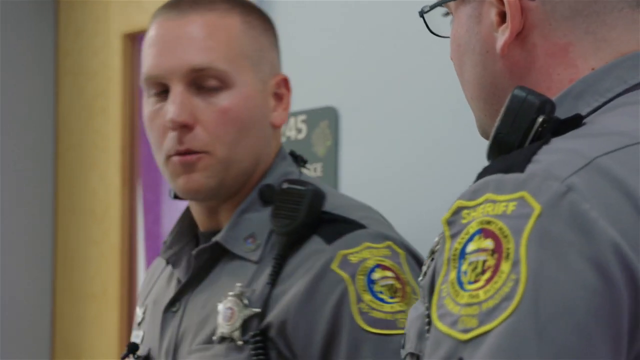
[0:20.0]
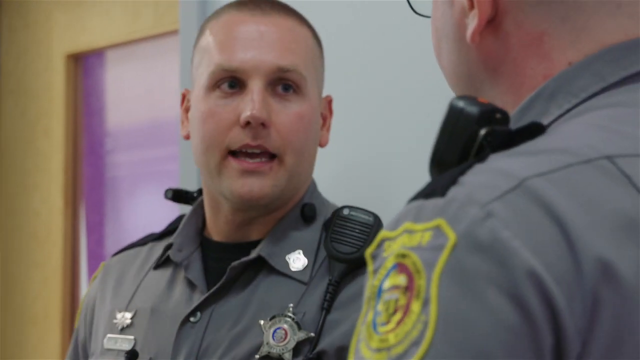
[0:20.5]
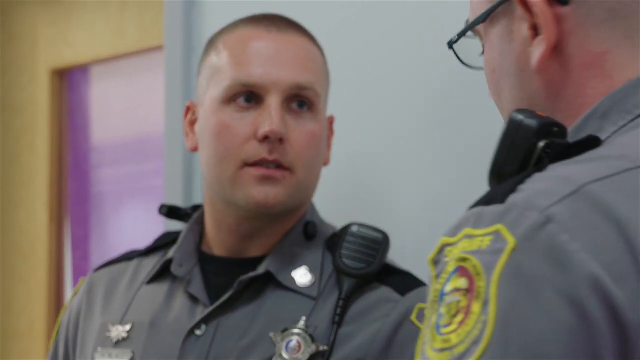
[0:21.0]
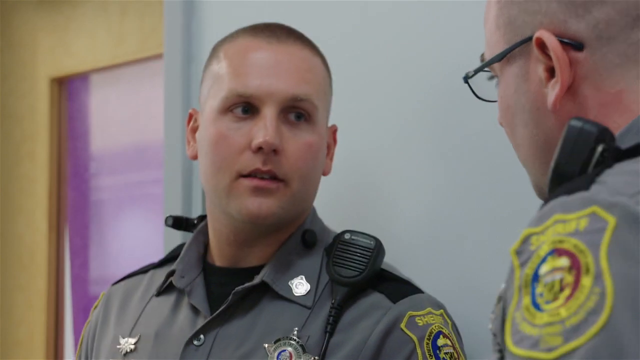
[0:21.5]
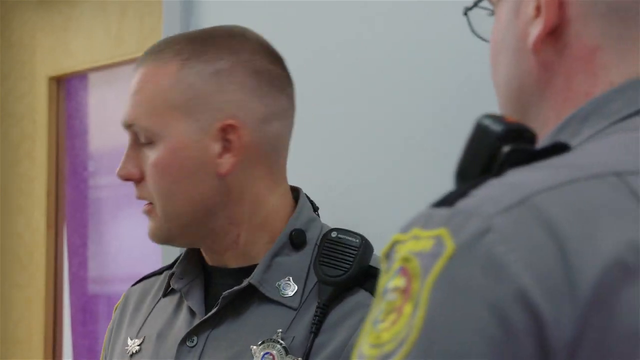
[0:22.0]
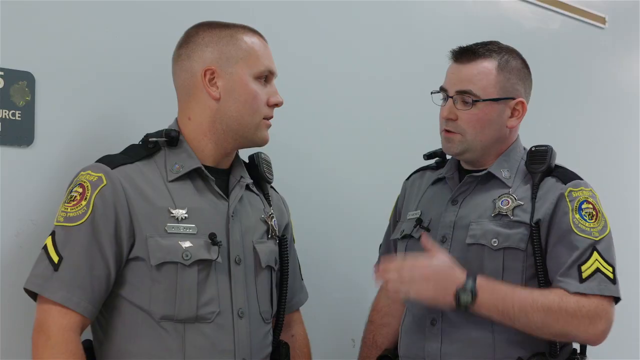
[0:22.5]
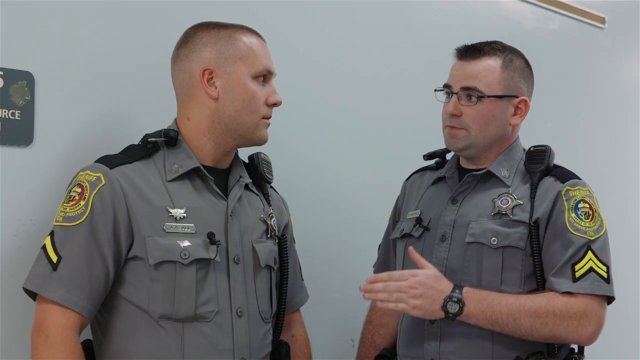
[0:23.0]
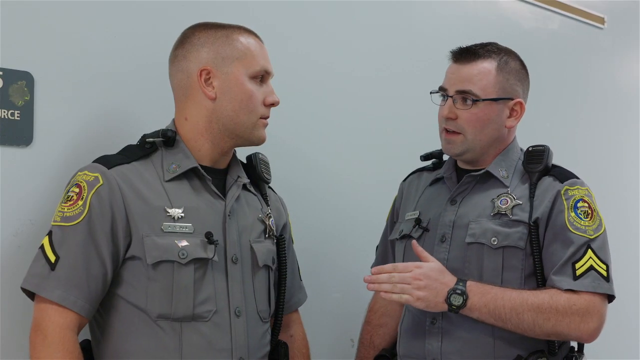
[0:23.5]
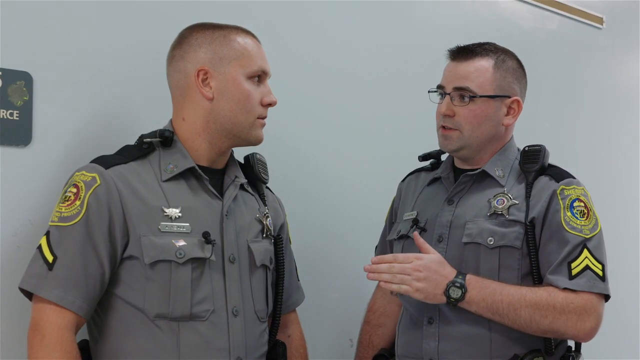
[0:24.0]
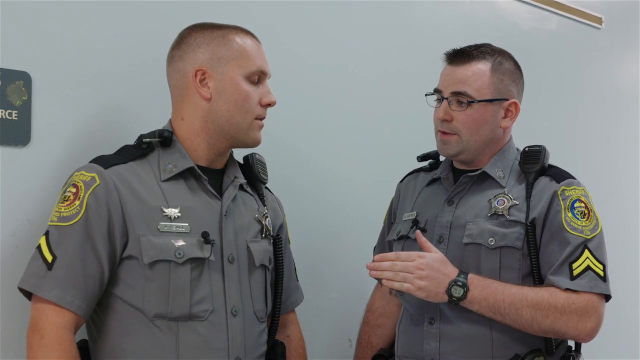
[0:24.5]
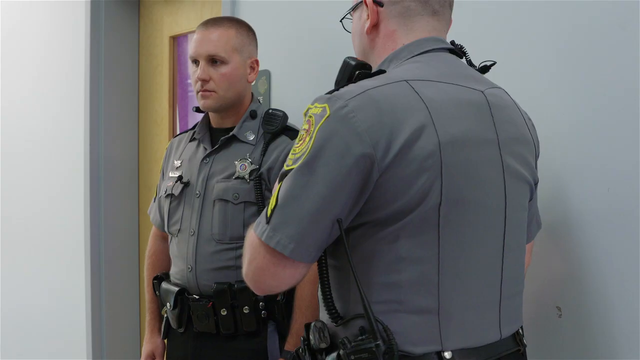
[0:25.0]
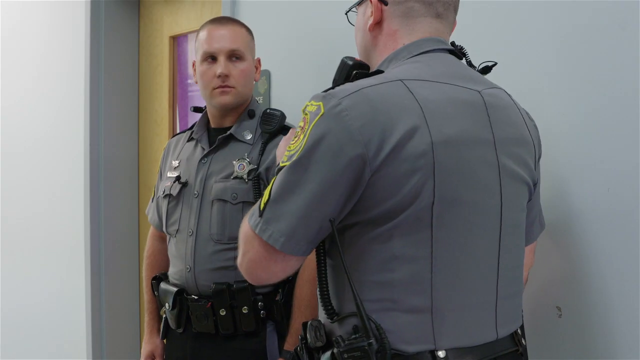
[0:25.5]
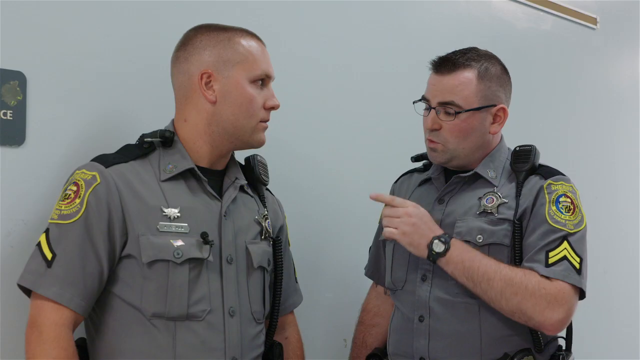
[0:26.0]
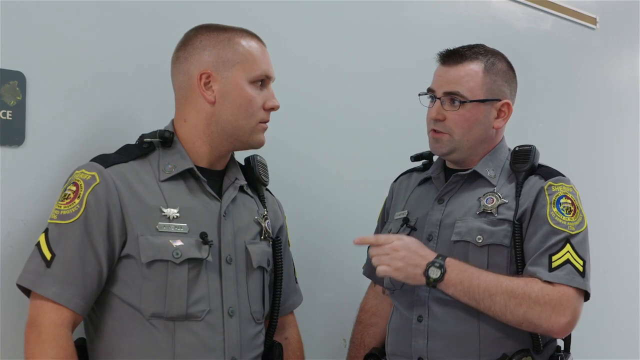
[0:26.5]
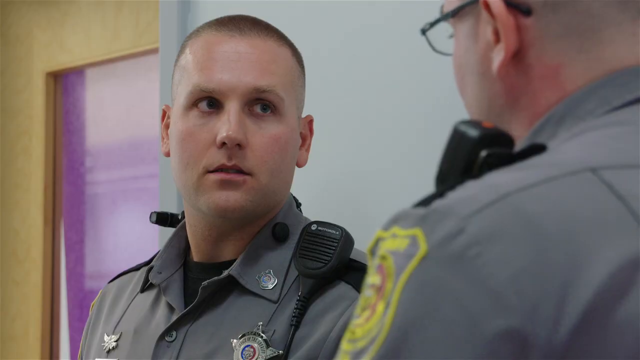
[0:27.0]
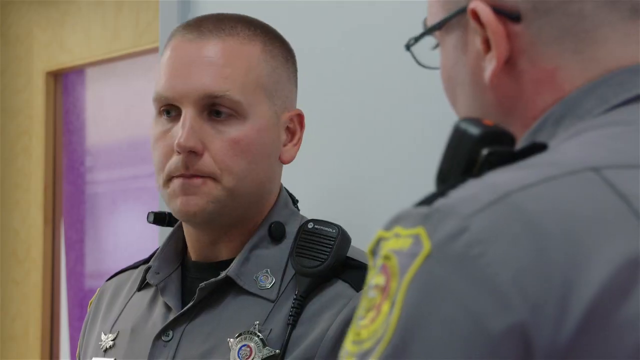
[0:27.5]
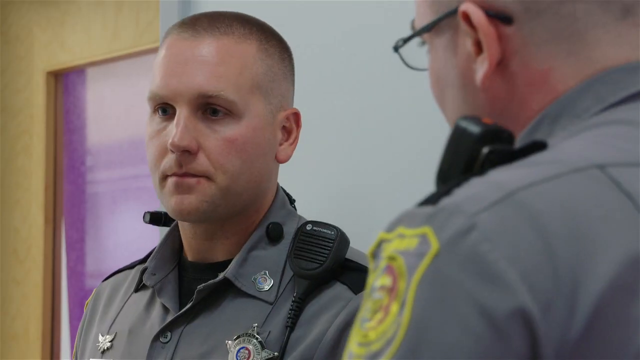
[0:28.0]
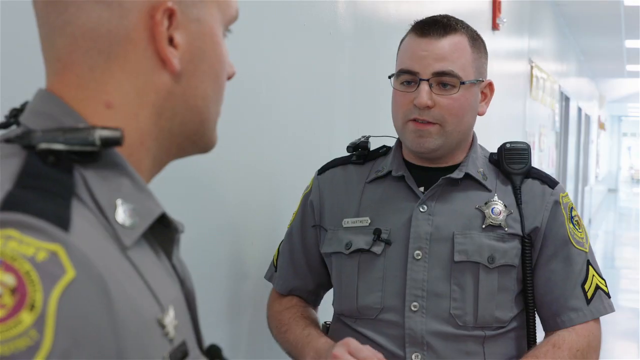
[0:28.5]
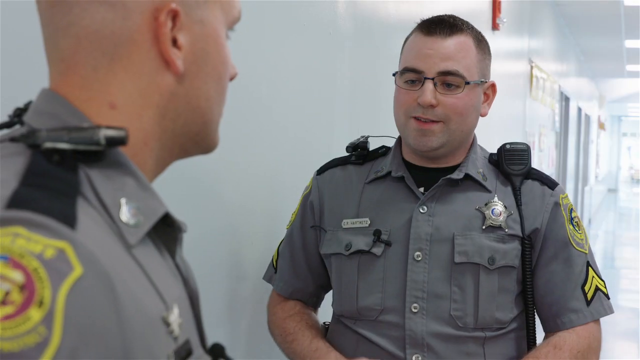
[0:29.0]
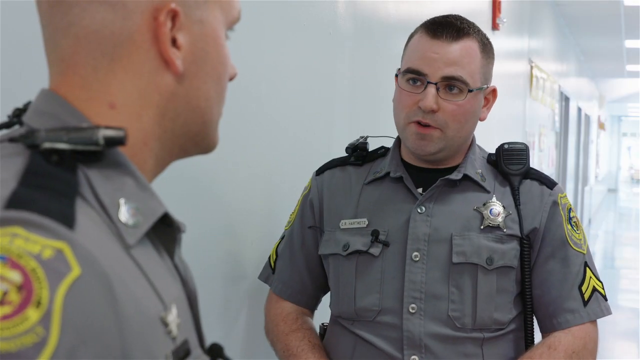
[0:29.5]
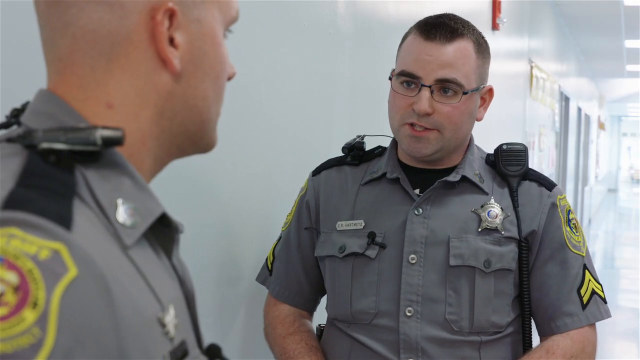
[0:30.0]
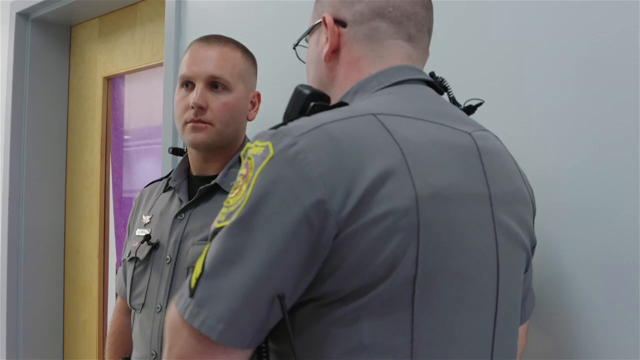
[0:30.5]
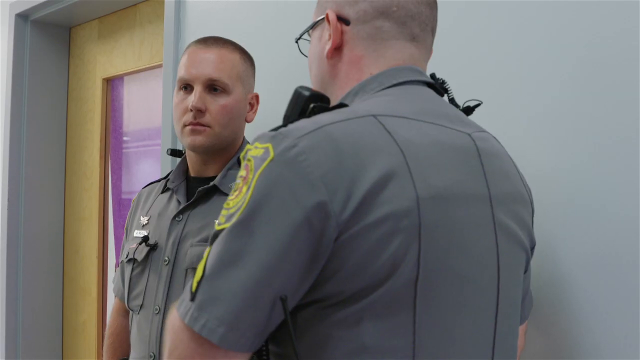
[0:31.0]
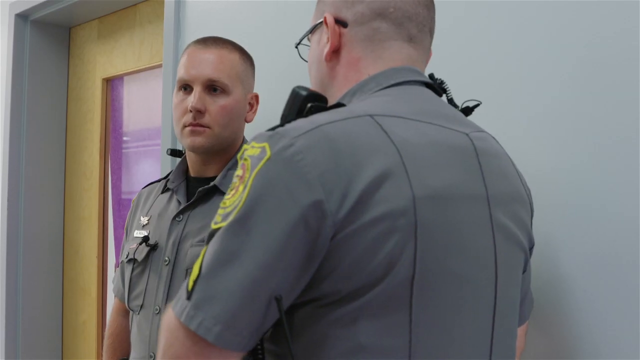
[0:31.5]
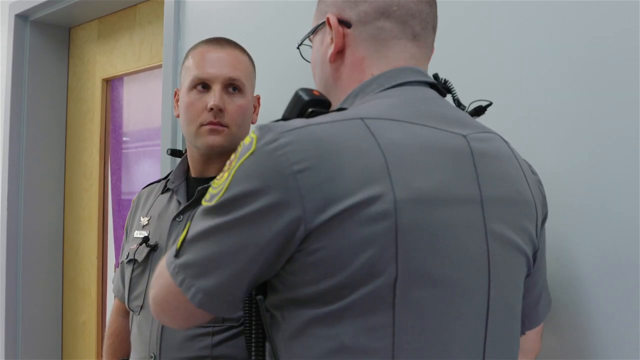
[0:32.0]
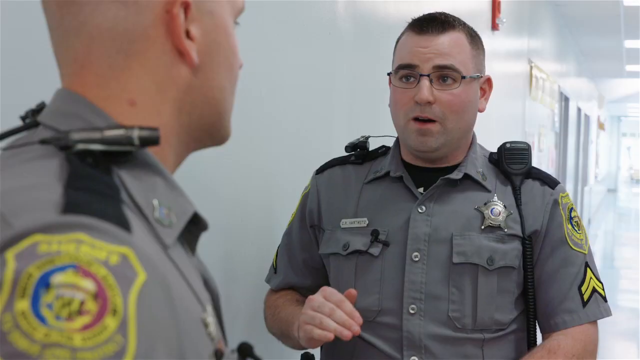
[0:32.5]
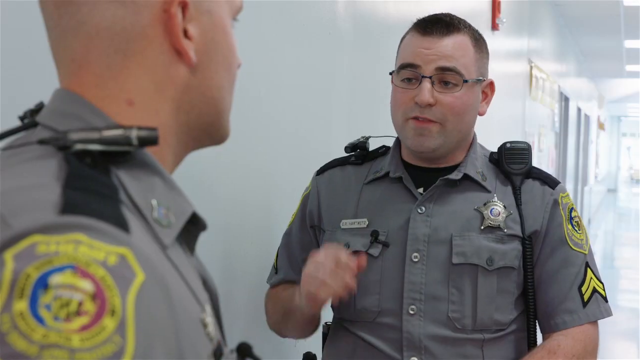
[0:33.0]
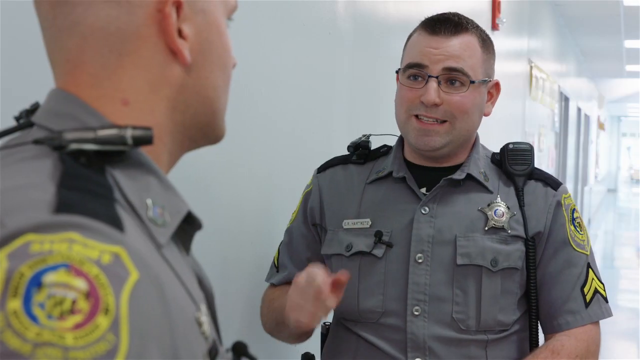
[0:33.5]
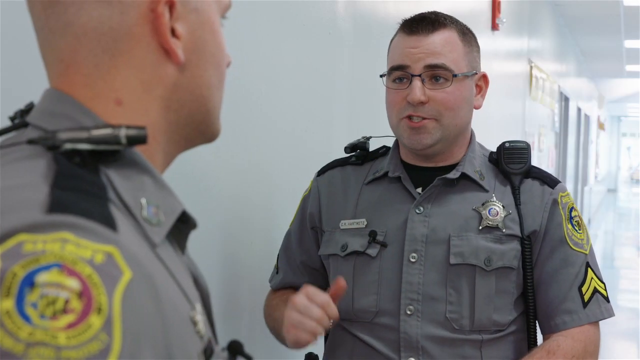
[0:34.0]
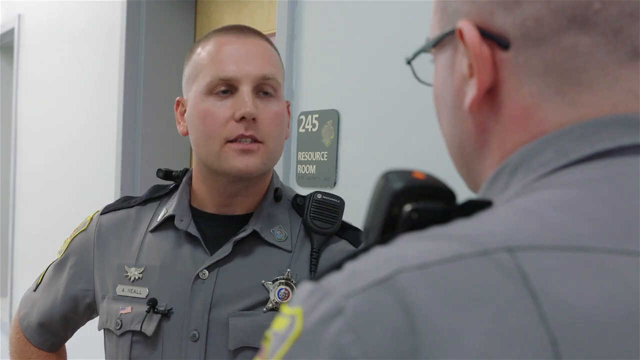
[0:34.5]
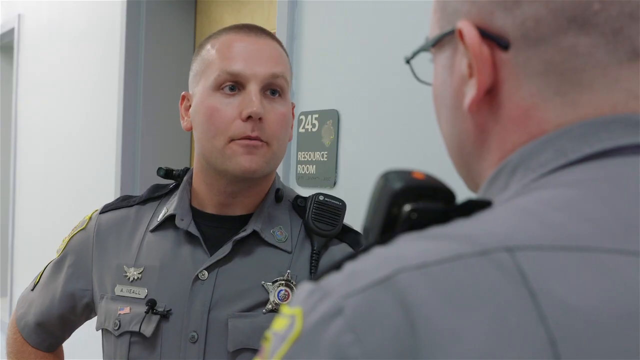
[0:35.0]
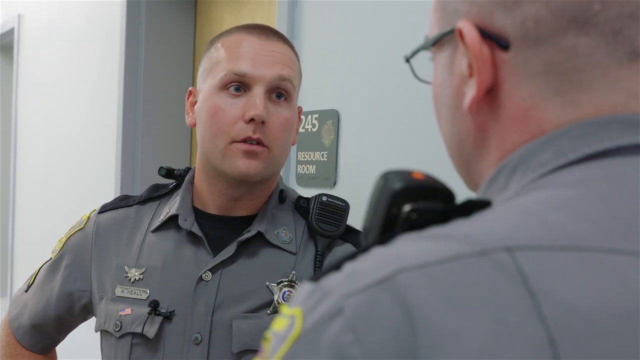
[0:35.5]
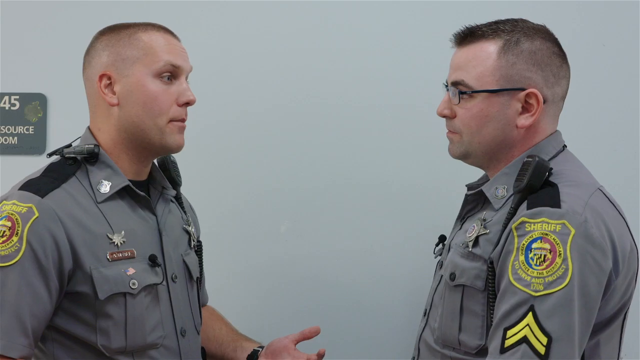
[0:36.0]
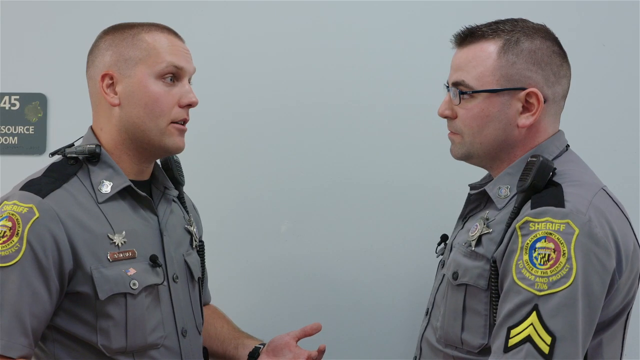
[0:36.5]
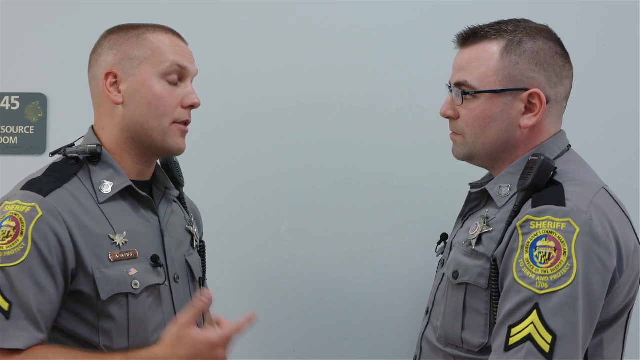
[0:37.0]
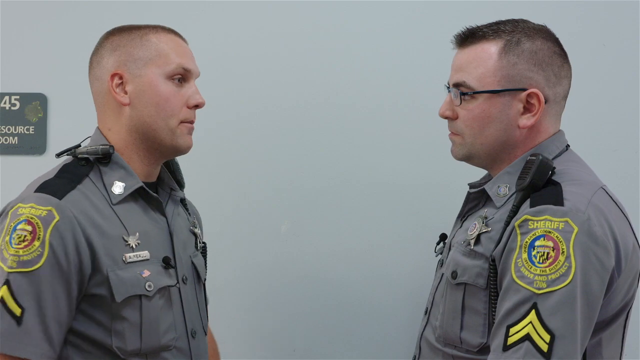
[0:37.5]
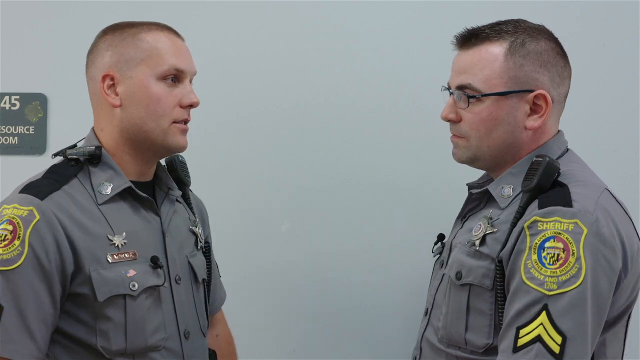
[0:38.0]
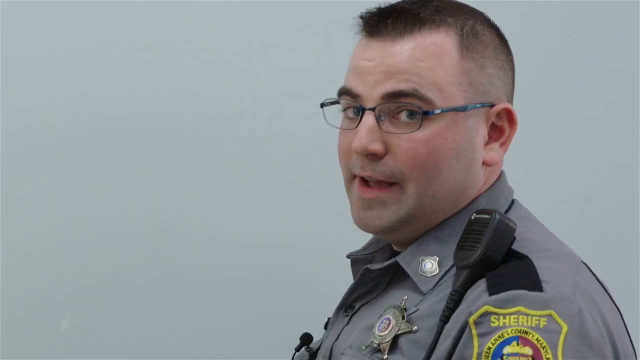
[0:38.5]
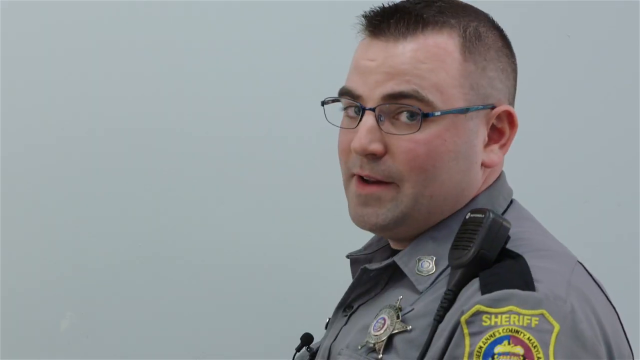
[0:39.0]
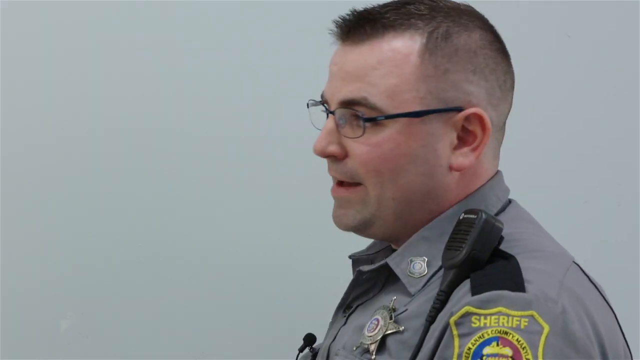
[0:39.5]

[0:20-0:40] The two police officers in gray uniforms are shown talking to each other, their radios clipped to their vests. One of them wears glasses, and the other kind of has red around the neck; both are Caucasian and probably around 30 to 35 years old. One officer, who has short brown hair, seems to leave the conversation. The other officer, somewhat bald-ish with also short brown hair and a bit less chunky than the other, keeps talking and kind of reinforces what the other officer is saying by shaking his head and nodding. No other people appear.